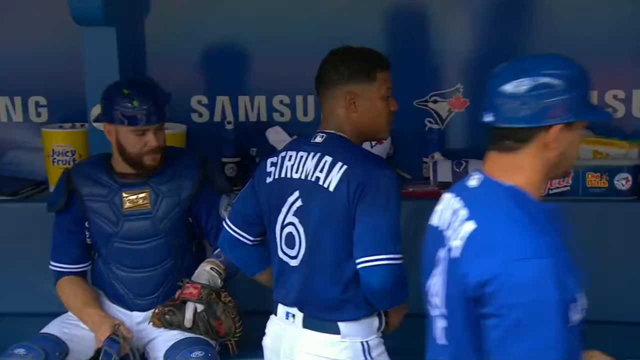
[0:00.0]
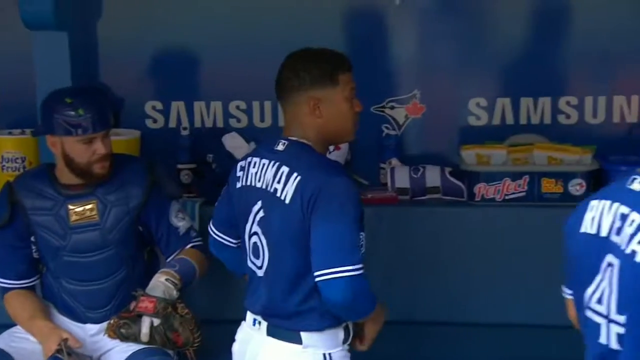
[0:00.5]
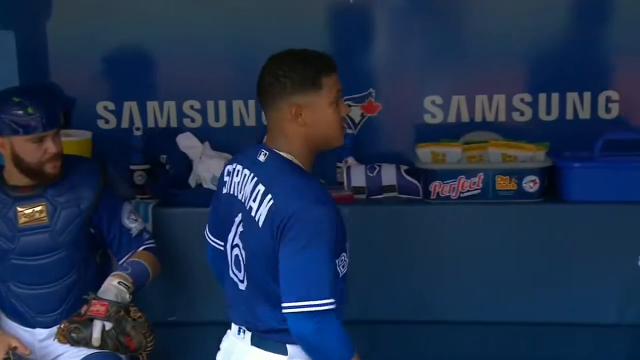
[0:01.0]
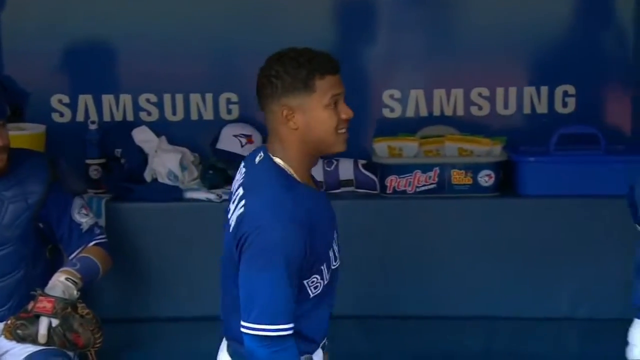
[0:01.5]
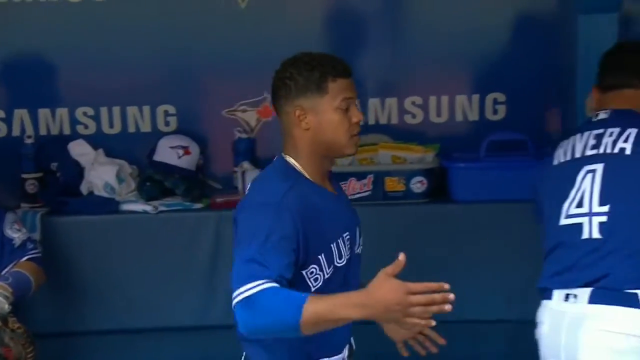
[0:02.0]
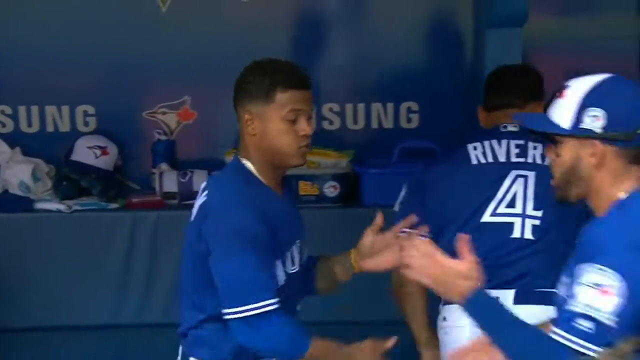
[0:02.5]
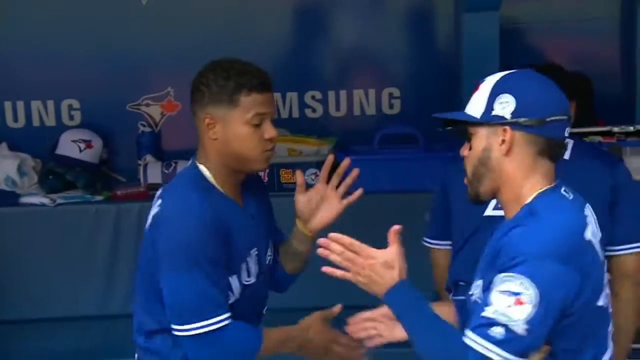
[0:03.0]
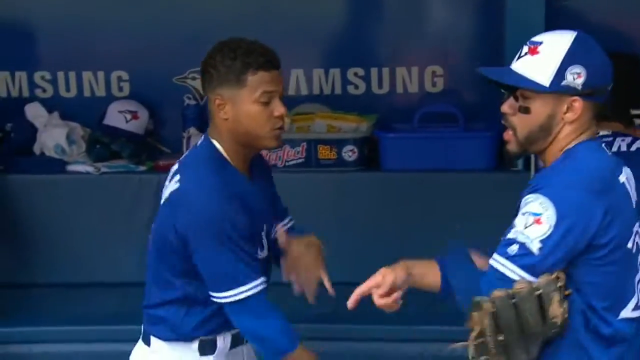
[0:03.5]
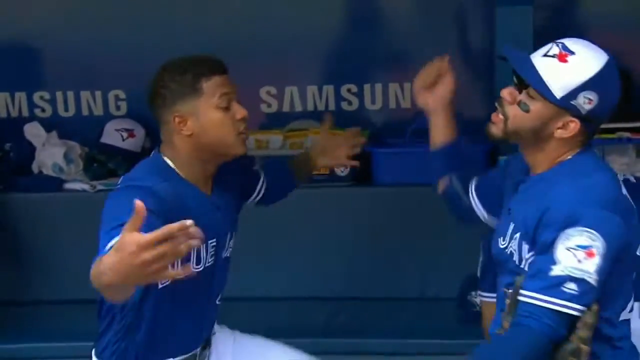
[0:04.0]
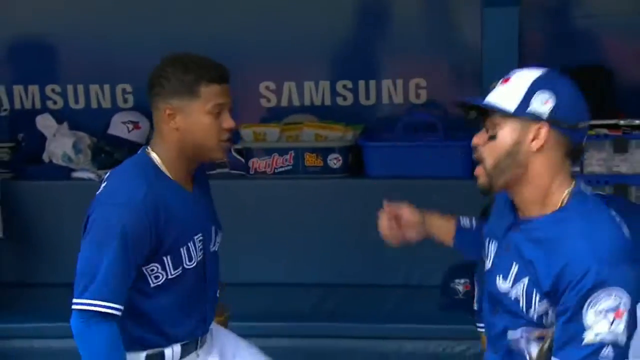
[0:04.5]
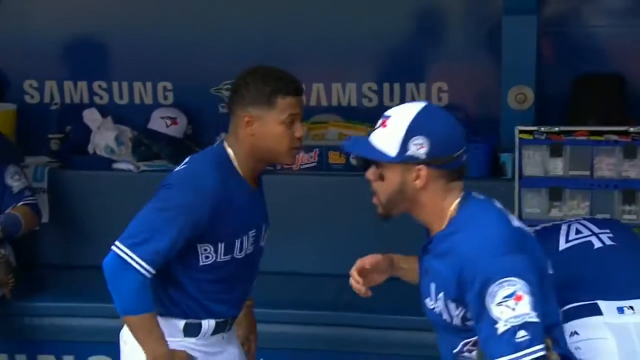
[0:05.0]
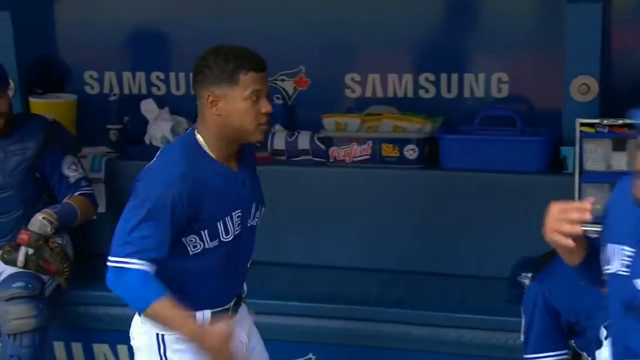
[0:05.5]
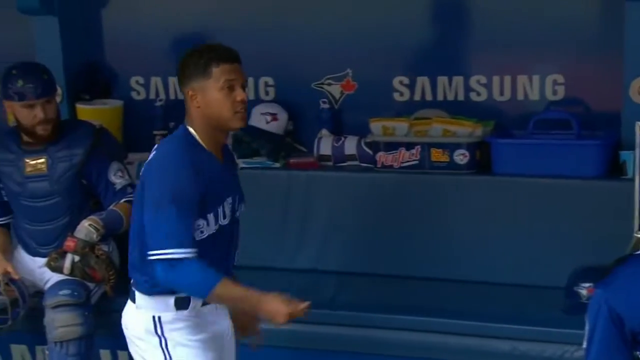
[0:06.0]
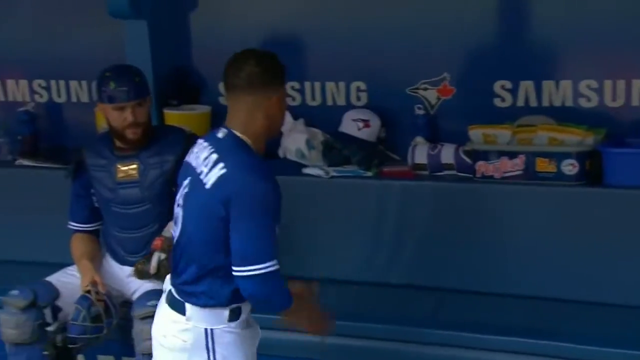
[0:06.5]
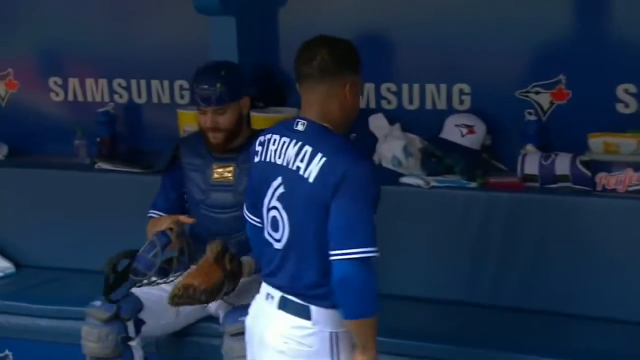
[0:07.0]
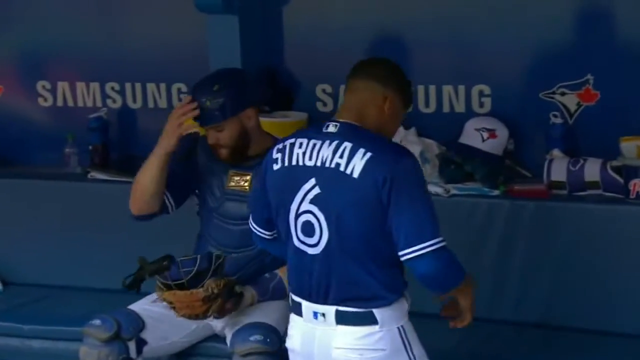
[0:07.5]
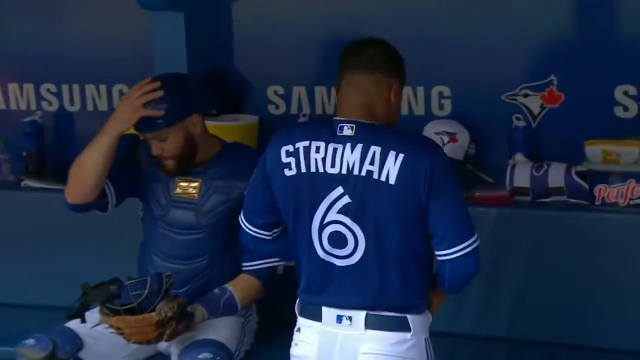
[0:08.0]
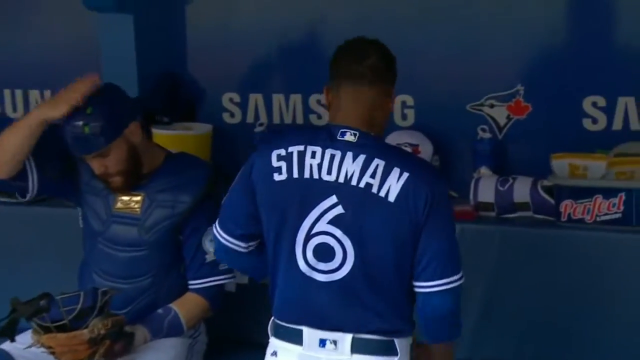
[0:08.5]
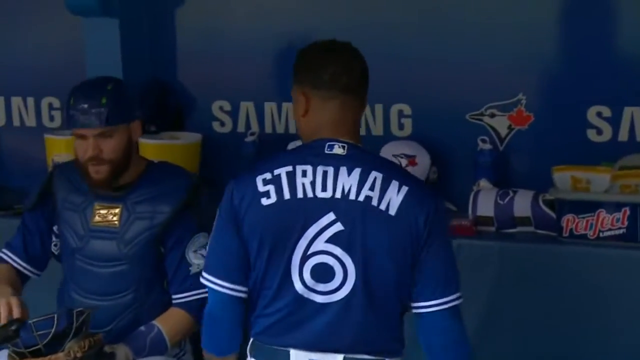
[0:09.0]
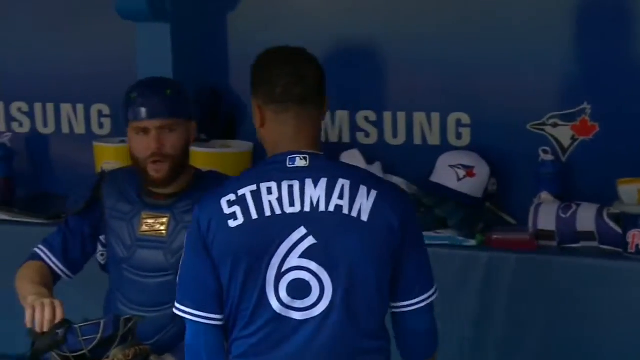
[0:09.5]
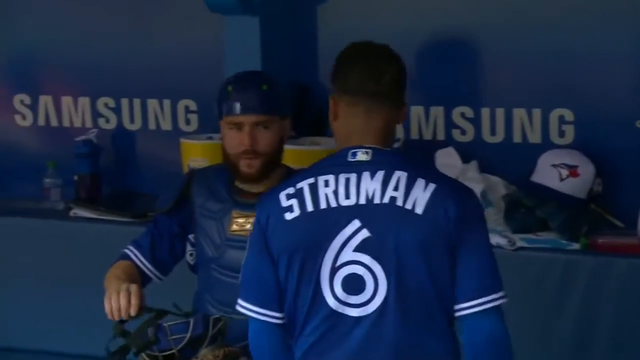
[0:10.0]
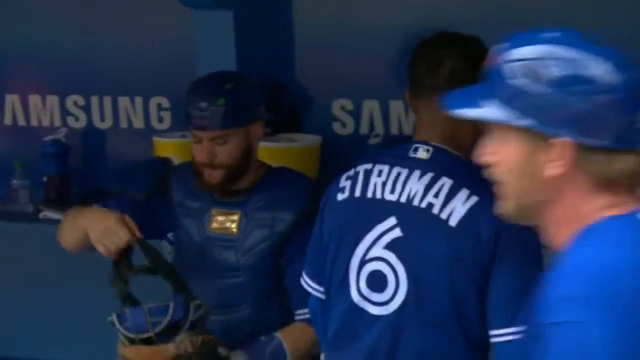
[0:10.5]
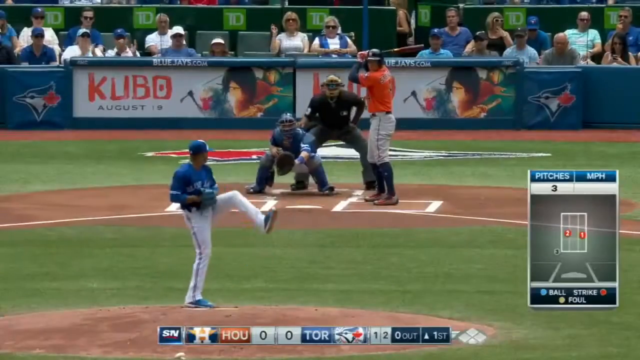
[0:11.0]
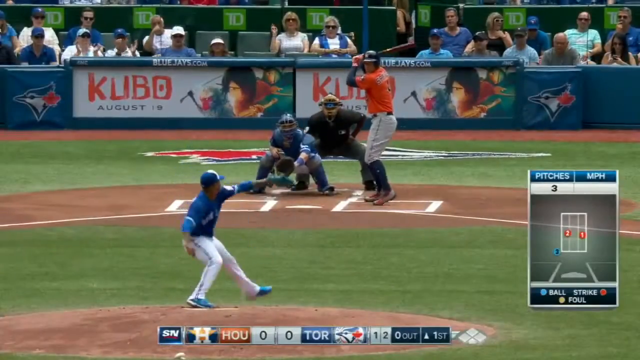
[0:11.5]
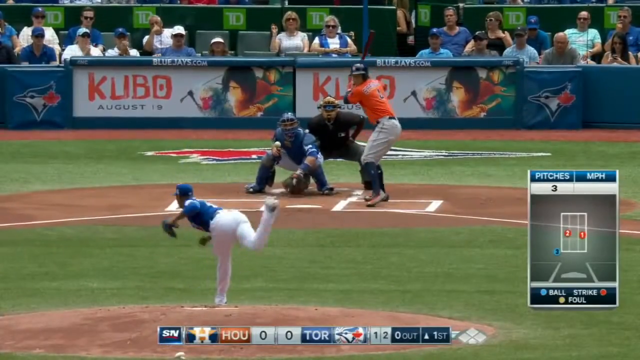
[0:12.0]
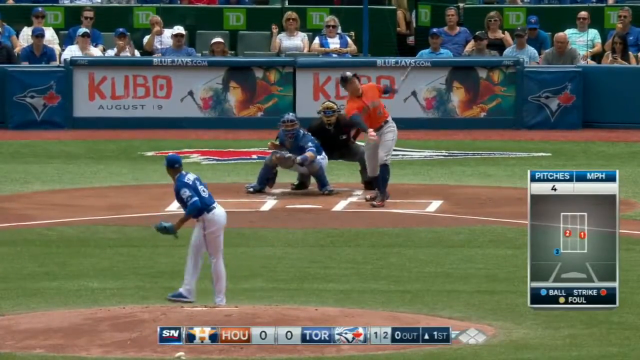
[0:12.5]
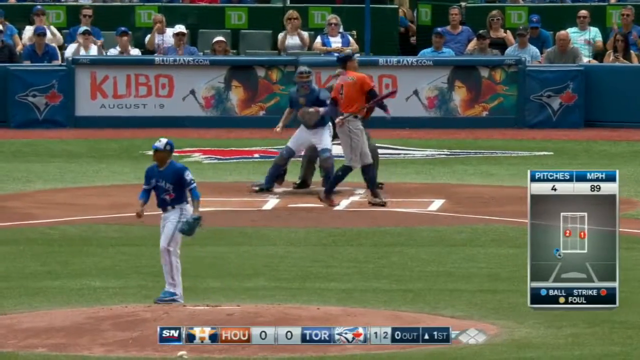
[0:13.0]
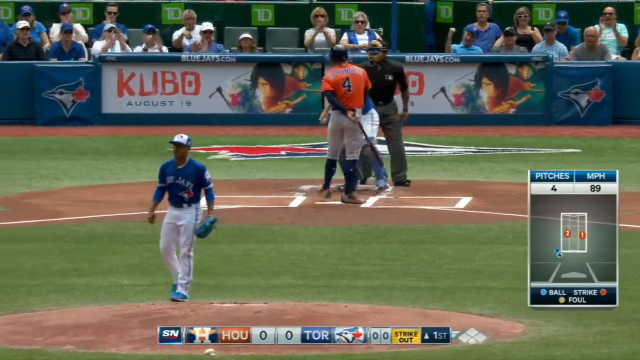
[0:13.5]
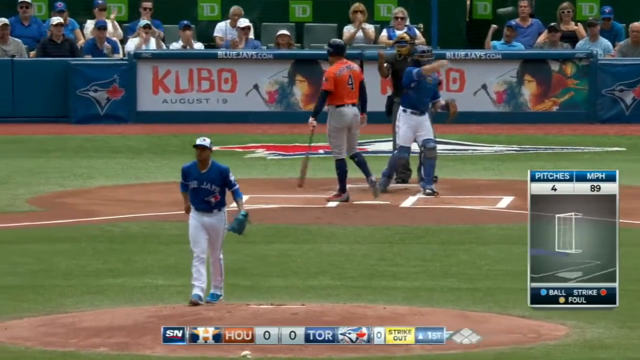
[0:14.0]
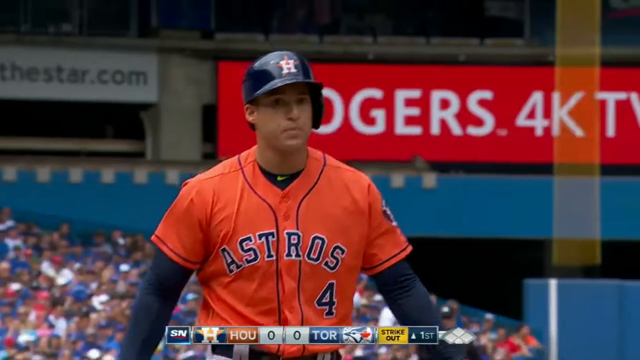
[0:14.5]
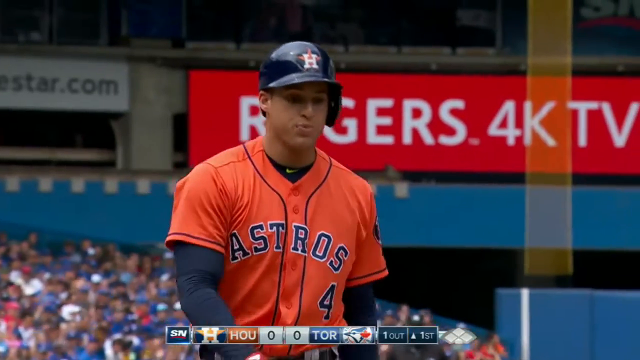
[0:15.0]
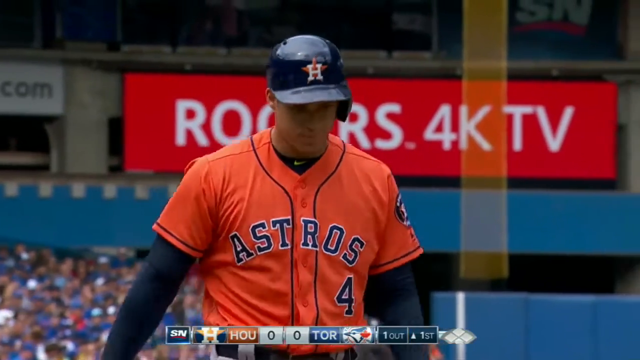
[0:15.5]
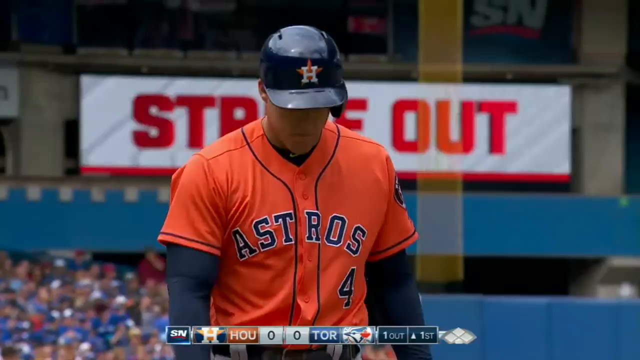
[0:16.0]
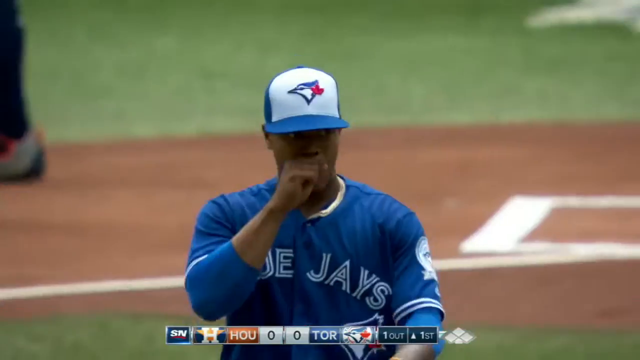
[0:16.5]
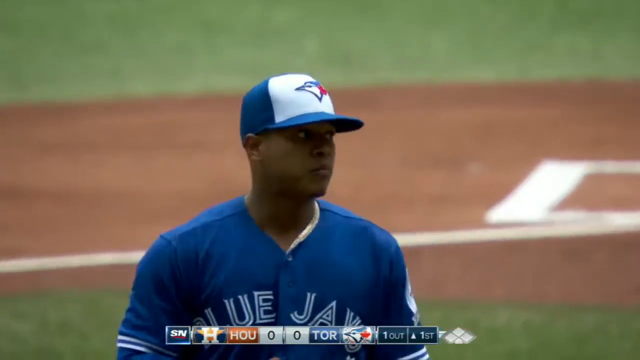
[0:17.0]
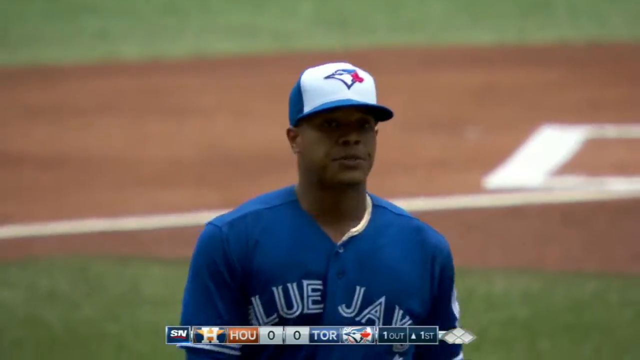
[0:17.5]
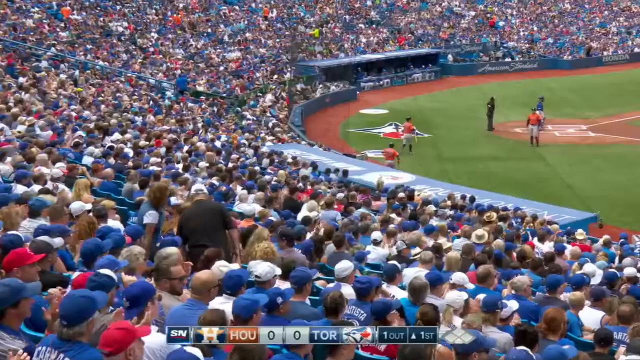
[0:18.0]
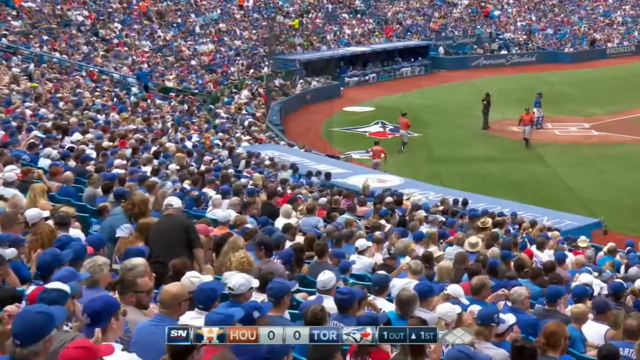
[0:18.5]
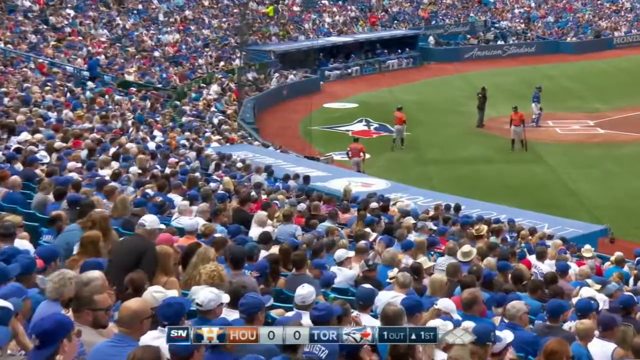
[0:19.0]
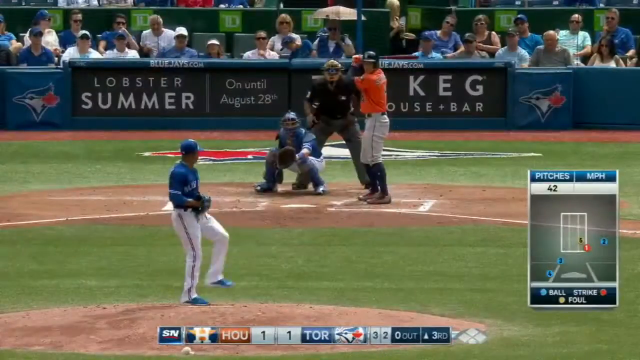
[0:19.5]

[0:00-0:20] What appears to be a baseball game is shown. Players wear blue uniforms with white numbers and letters, and "Samsung" appears in white lettering on a blue wall. The area is possibly the dugout, where there are yellow buckets with "juicy fruit" on them. The players are identified as Blue Jays. Two black players do some sort of jig dance, and Stroman, number six, is in the dugout talking to what looks like the catcher. The view then shifts to the field, where the pitcher throws against the Astros. Astros player number four, in an orange uniform, swings and is struck out by a Blue Jay, and two players celebrate the strikeout. The pitch was 89 miles an hour. Many people fill the crowd.